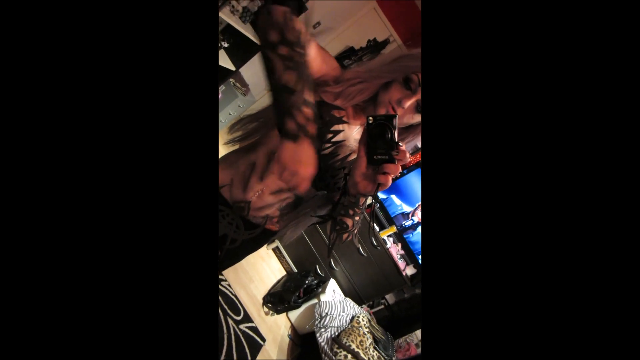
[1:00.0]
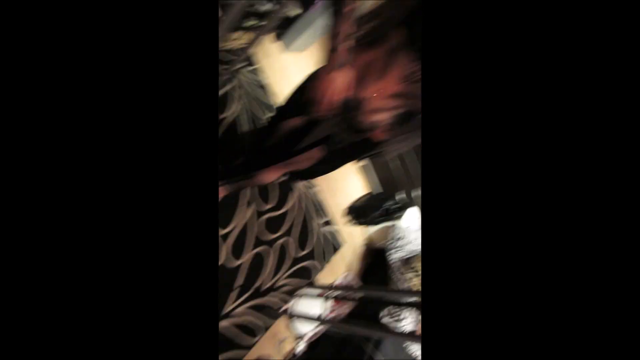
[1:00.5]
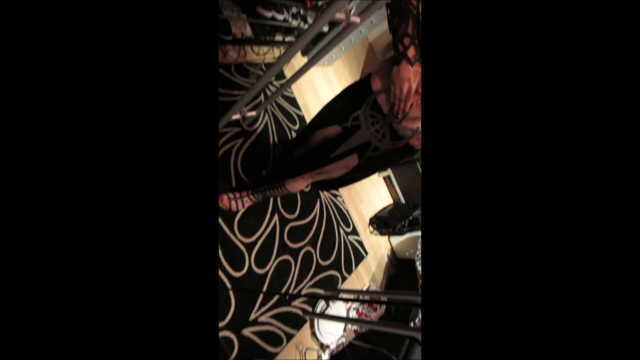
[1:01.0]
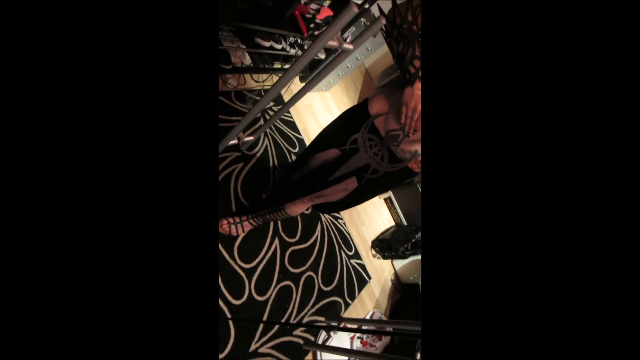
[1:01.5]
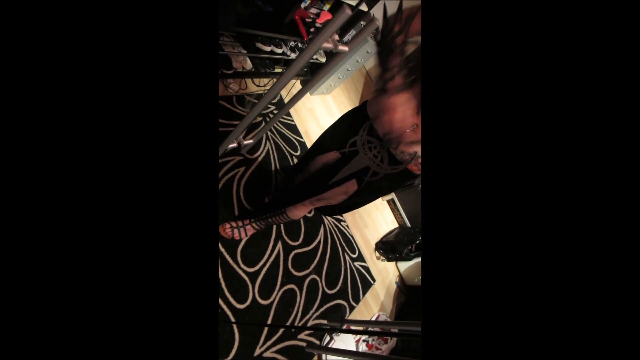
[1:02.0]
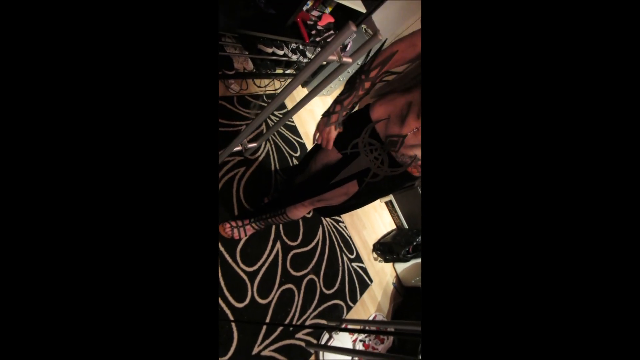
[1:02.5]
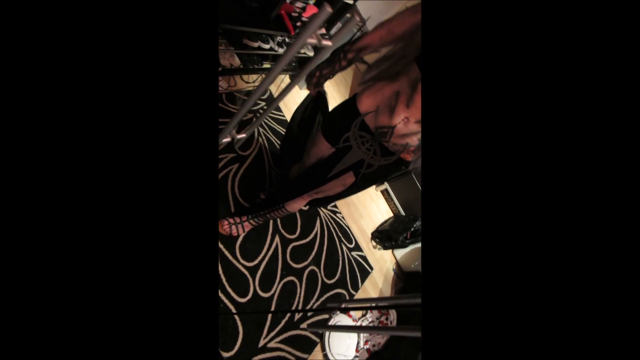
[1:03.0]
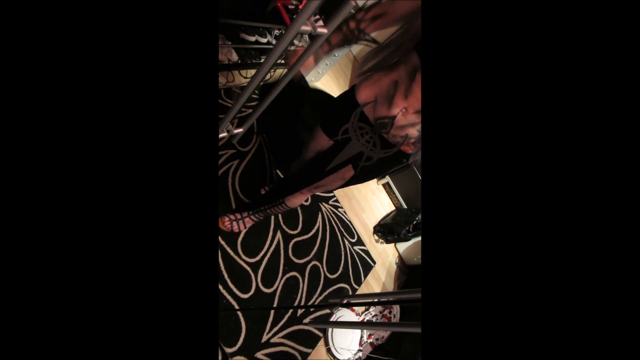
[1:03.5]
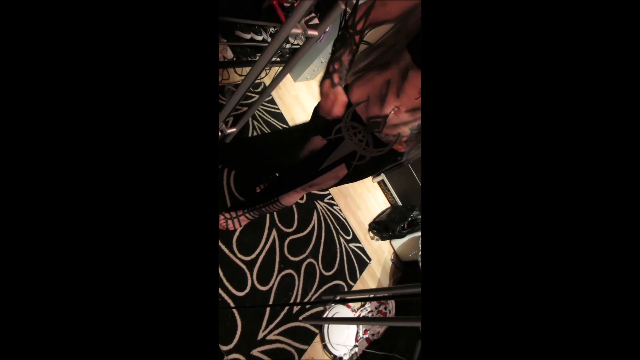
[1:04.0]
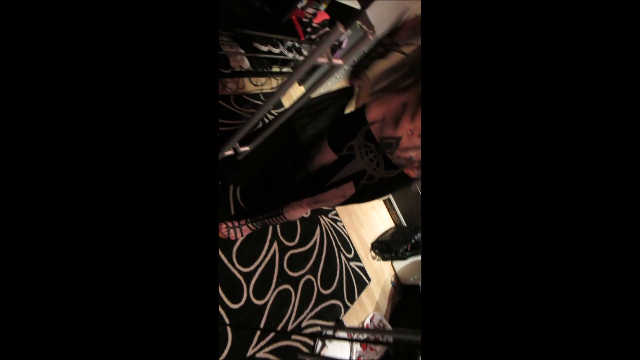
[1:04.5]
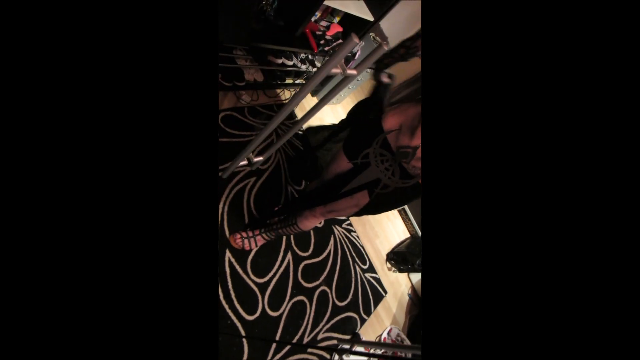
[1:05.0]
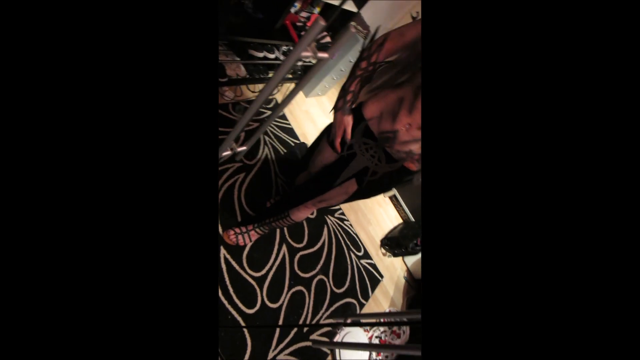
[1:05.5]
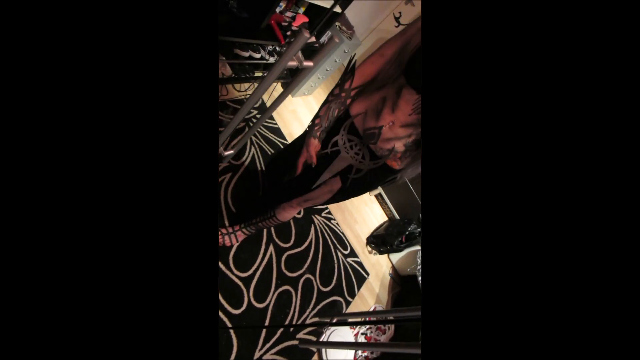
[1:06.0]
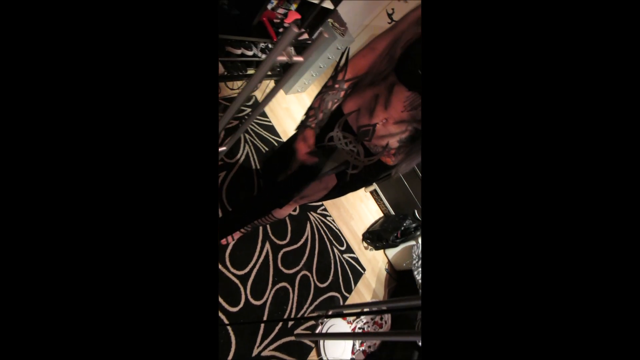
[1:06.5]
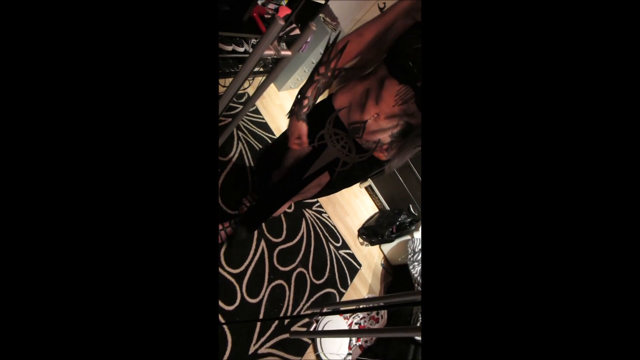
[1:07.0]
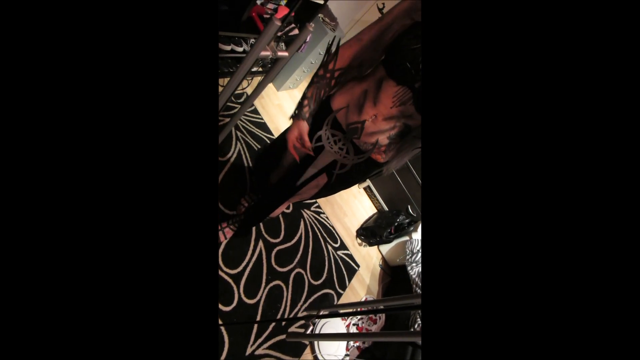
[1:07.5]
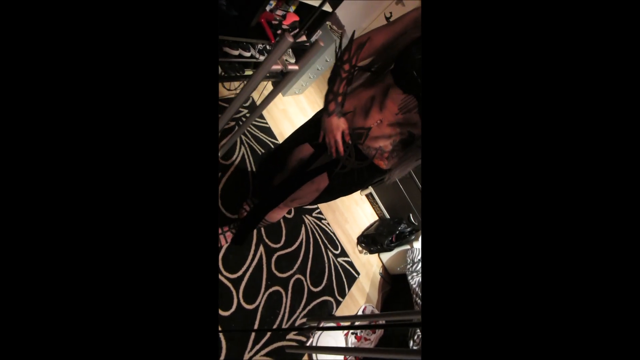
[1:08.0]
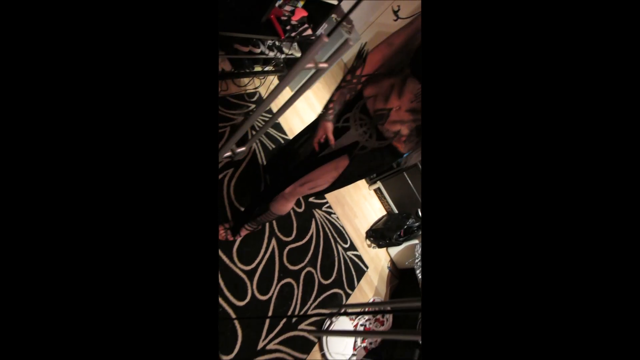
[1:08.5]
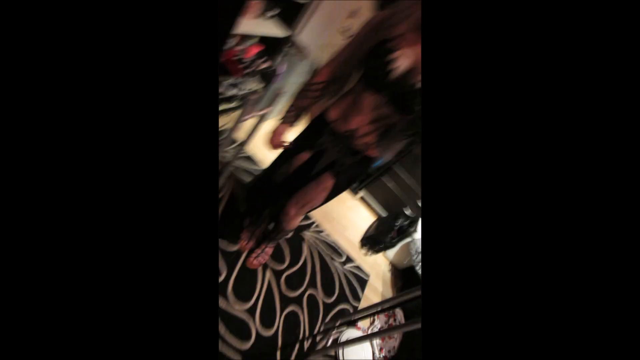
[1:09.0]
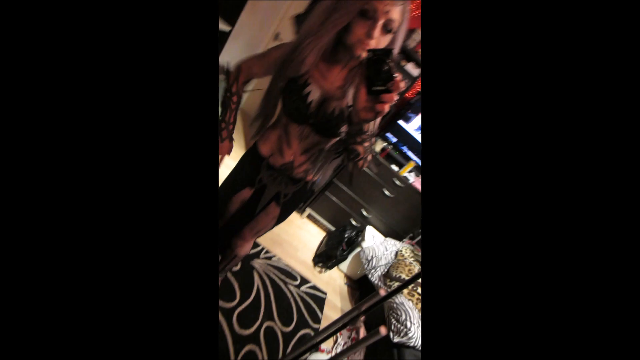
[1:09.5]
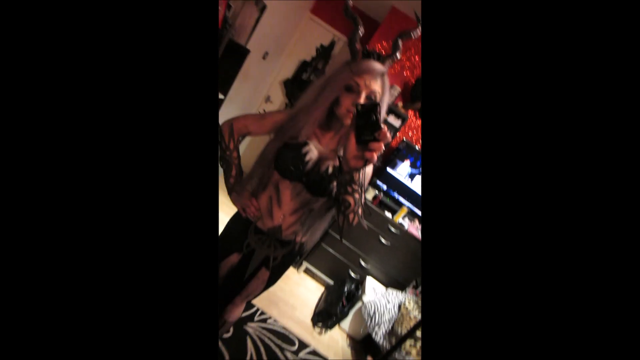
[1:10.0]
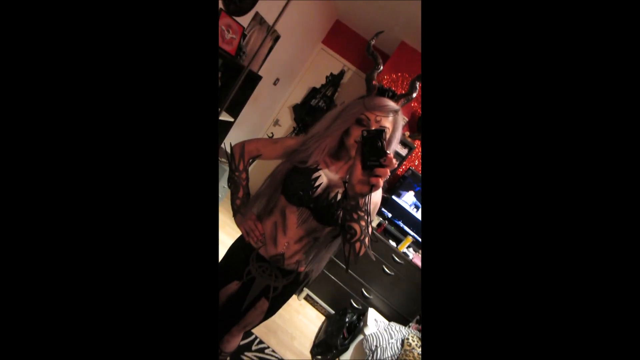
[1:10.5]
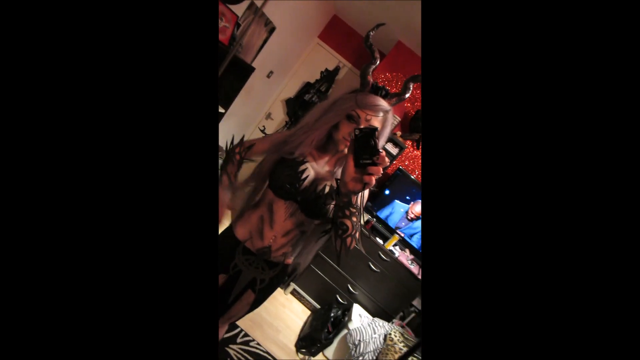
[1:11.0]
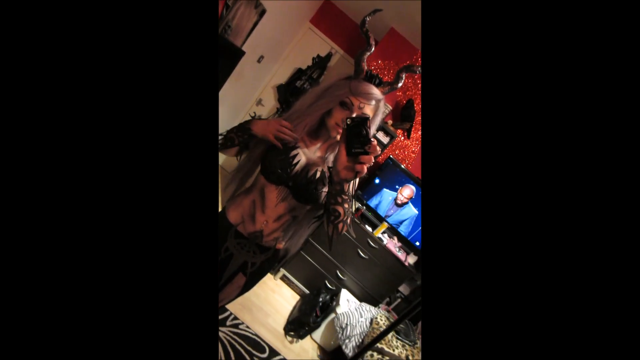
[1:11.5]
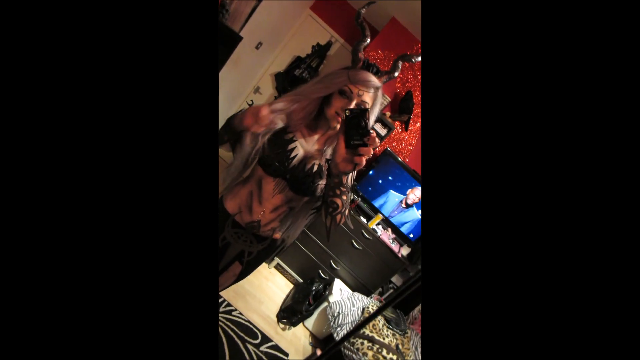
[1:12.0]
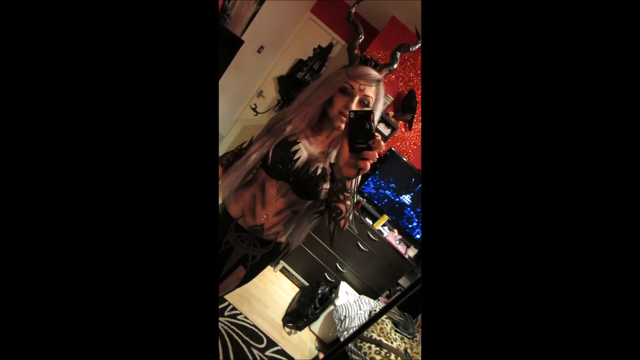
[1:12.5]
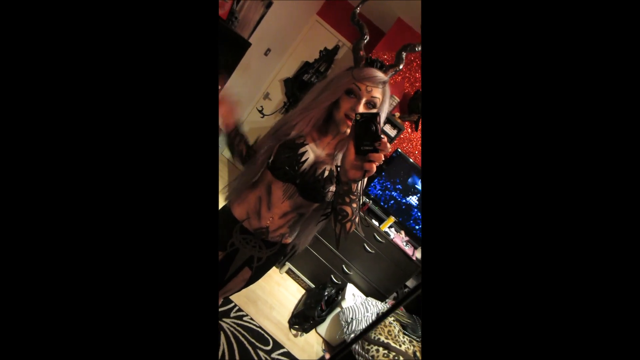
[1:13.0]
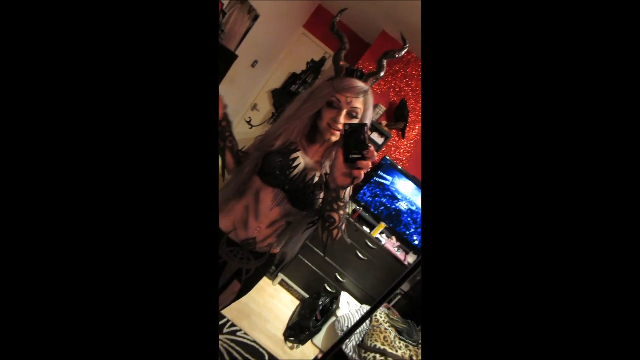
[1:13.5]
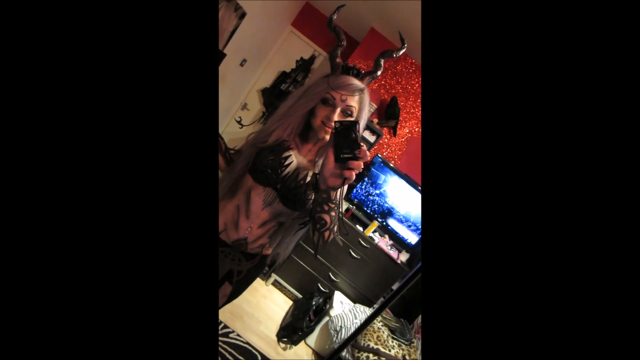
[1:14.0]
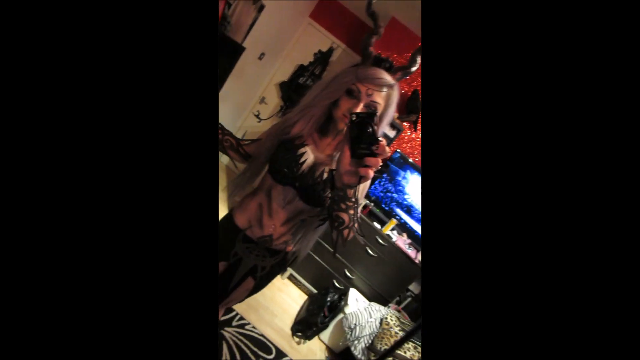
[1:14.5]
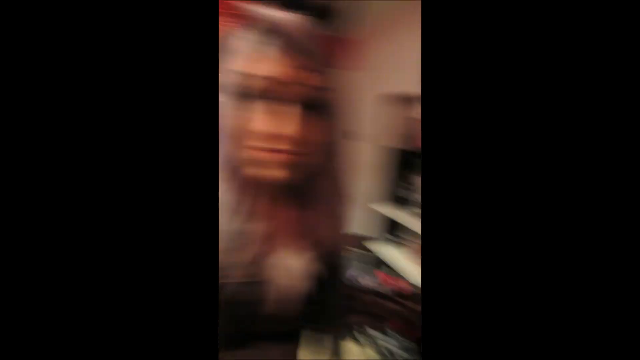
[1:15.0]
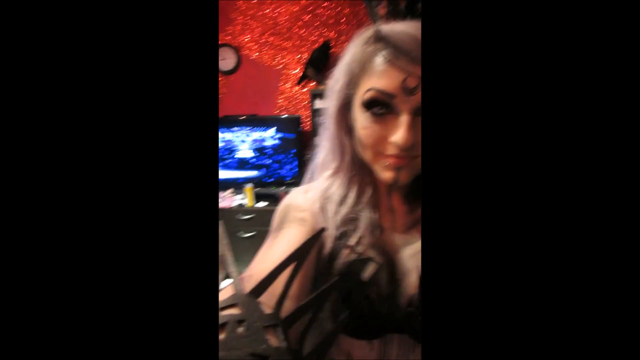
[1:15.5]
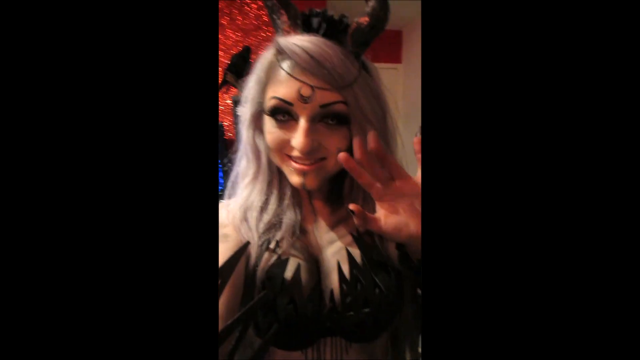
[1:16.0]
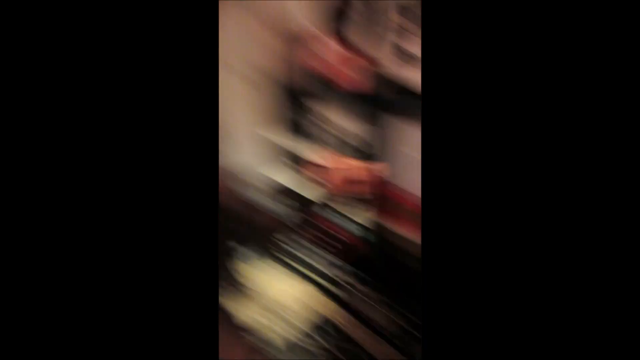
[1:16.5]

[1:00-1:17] They start moving the piece on the right and then move the front of the cloth piece. On the left-hand side, they grab the left side of their hair. Then they turn the camera around, reversing from the mirror mode, and wave at the camera, apparently waving goodbye. The outfit has a lot of intricate detail, with line patterns going all the way across their body that kind of look like darkness scars, possibly from hell; the dark areas seem to be there for atmosphere or definition as part of the makeup. The material of the emblem on the front of the bottom piece of the outfit is shown. The video ends after the waving.